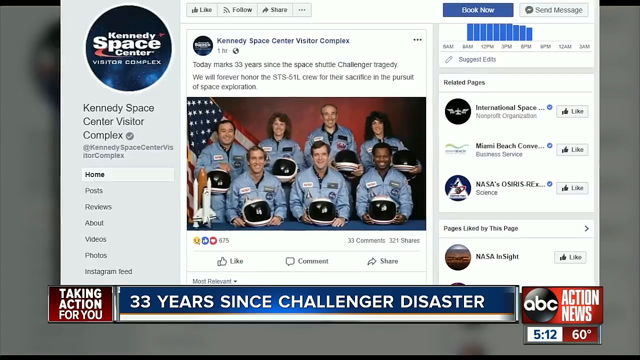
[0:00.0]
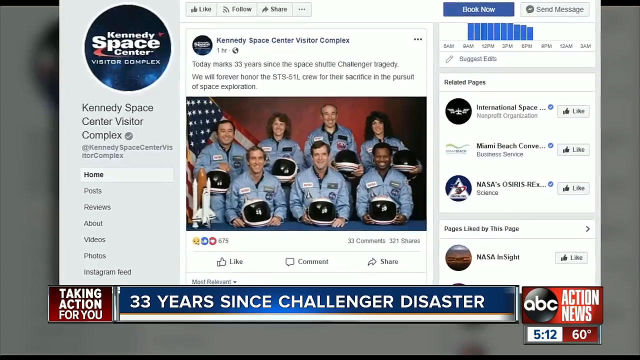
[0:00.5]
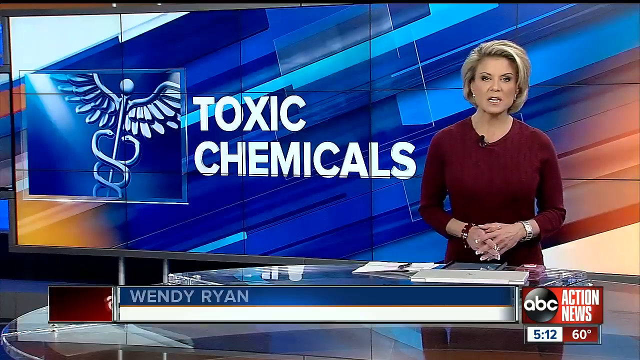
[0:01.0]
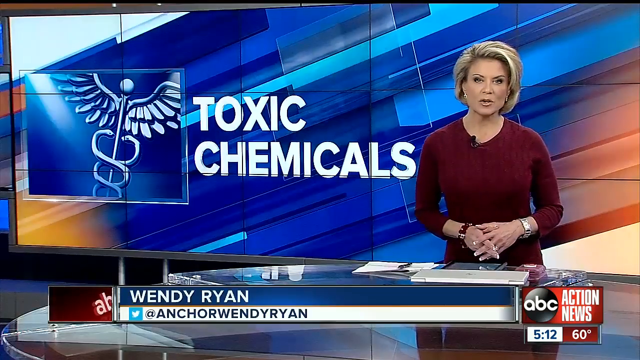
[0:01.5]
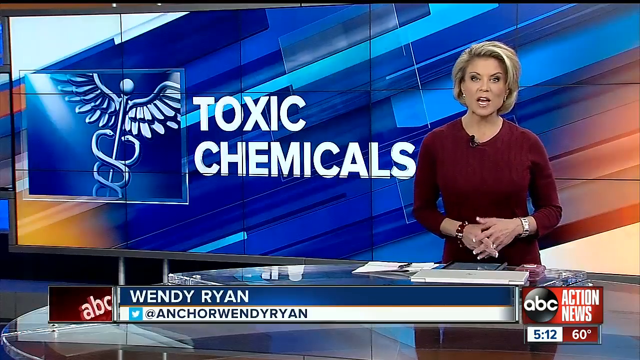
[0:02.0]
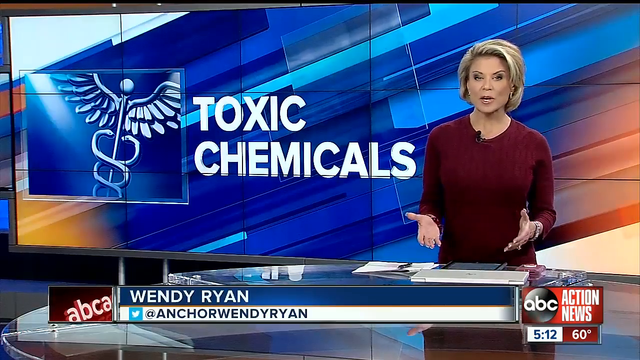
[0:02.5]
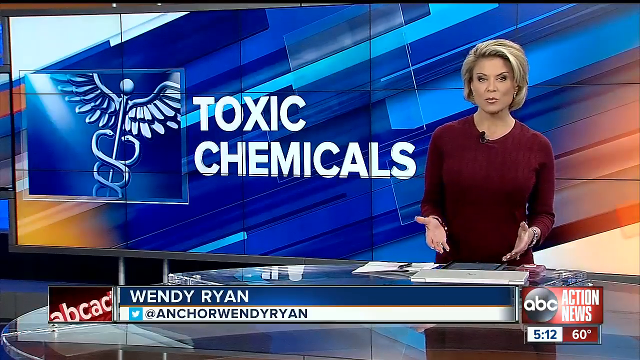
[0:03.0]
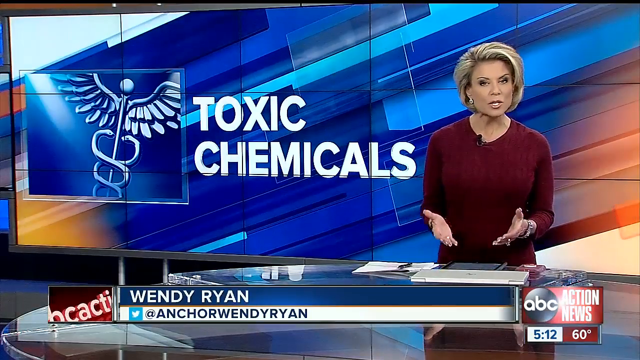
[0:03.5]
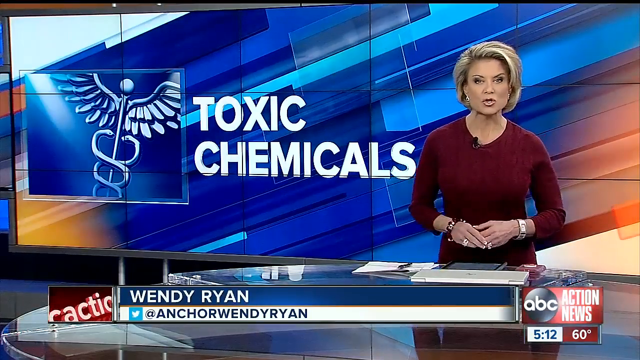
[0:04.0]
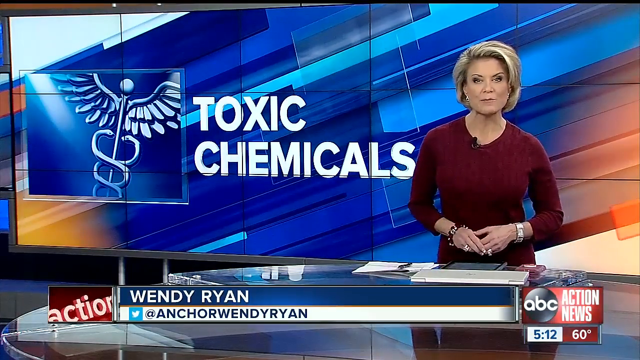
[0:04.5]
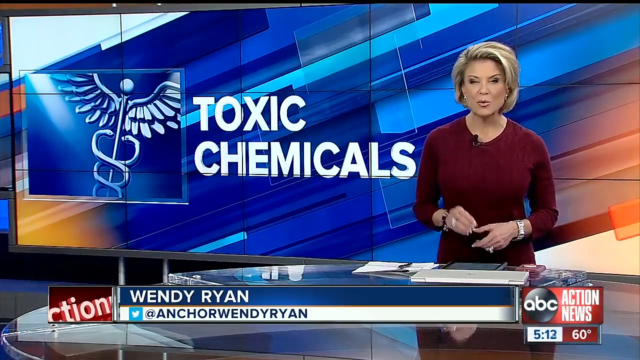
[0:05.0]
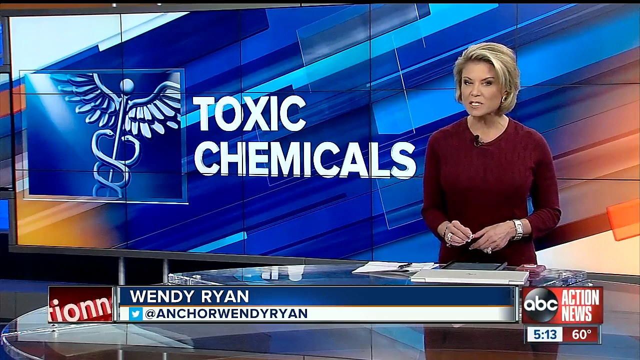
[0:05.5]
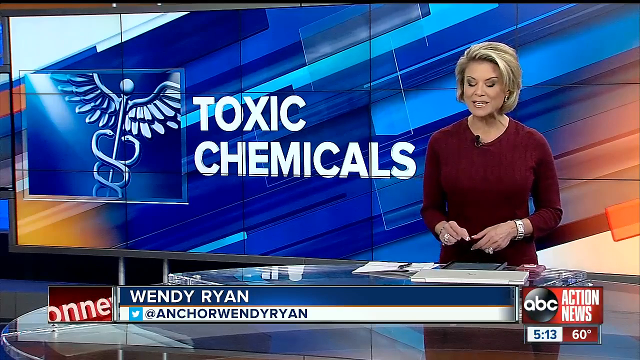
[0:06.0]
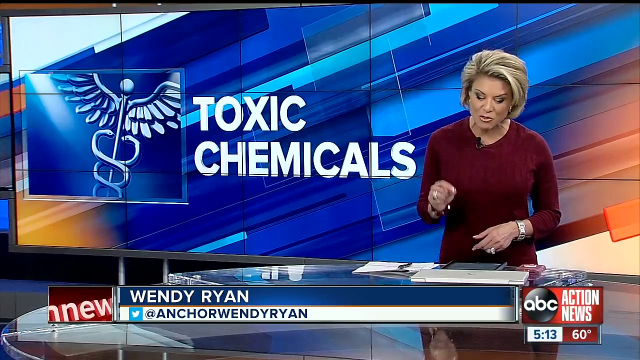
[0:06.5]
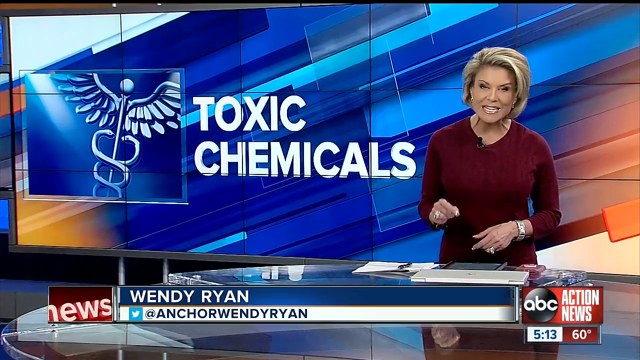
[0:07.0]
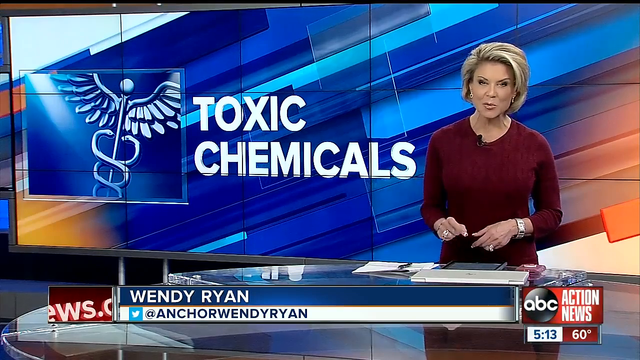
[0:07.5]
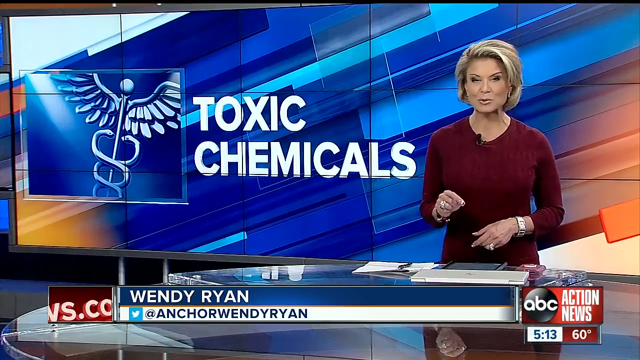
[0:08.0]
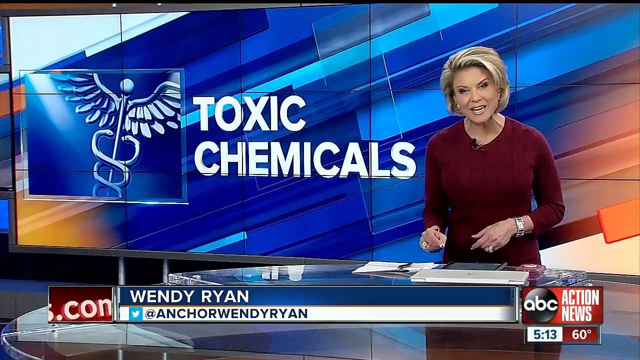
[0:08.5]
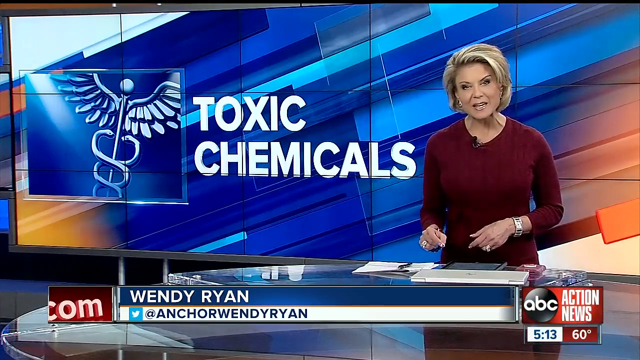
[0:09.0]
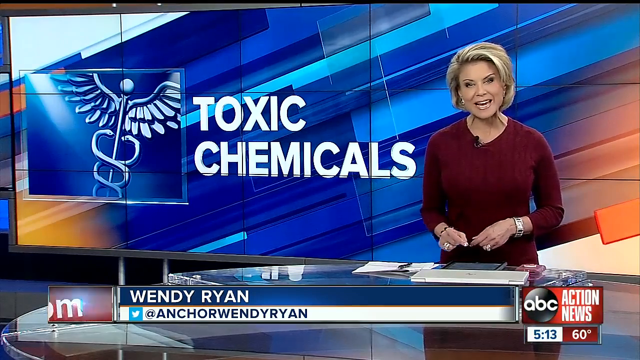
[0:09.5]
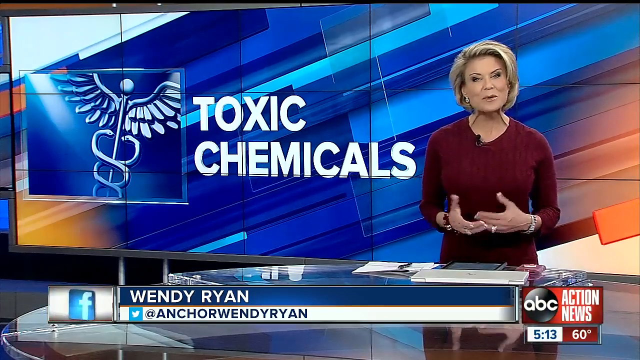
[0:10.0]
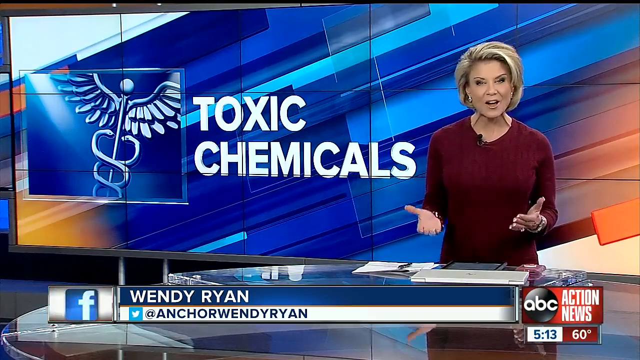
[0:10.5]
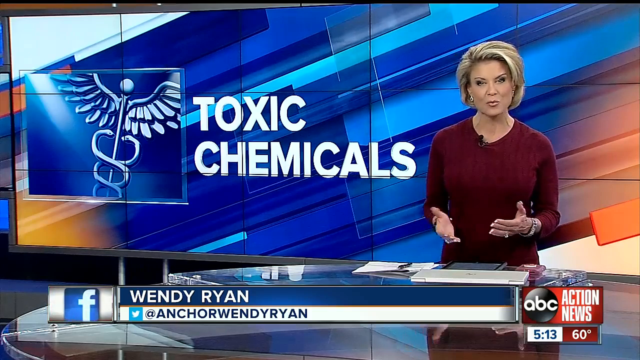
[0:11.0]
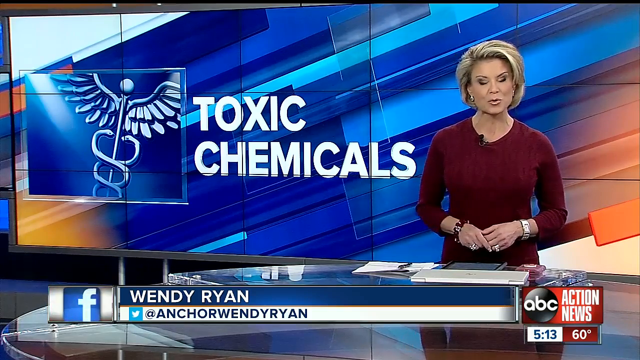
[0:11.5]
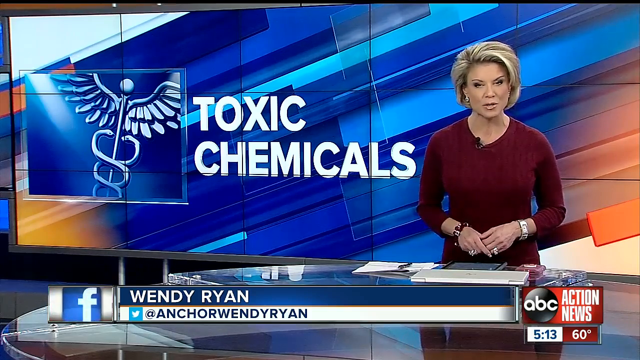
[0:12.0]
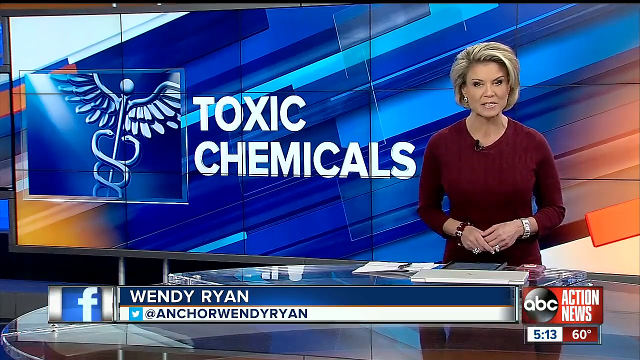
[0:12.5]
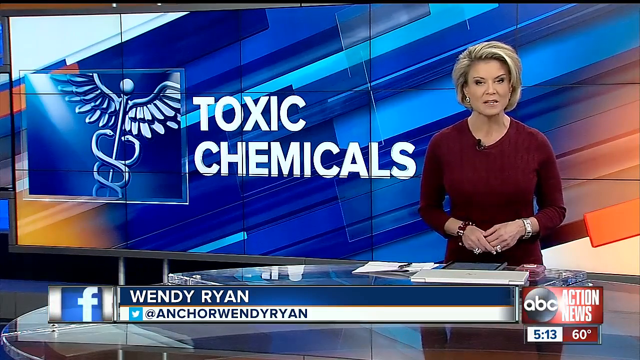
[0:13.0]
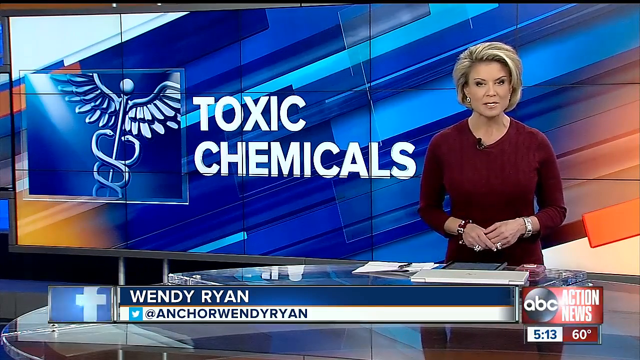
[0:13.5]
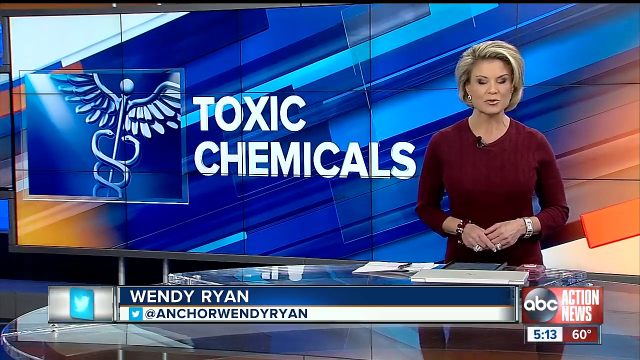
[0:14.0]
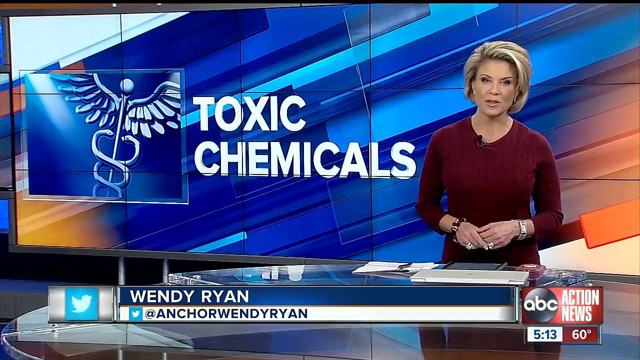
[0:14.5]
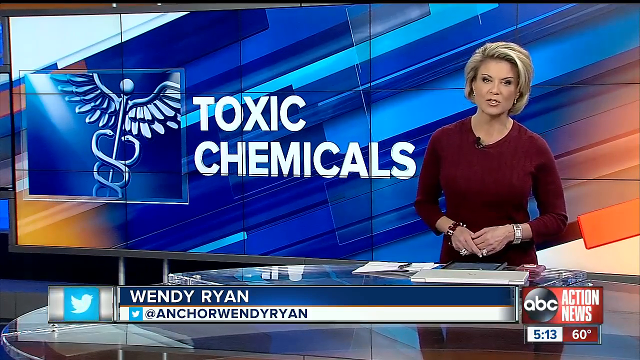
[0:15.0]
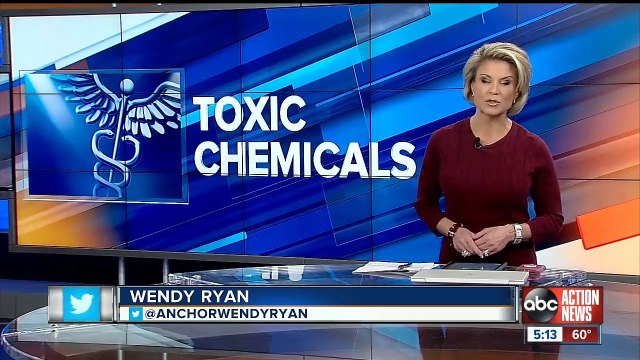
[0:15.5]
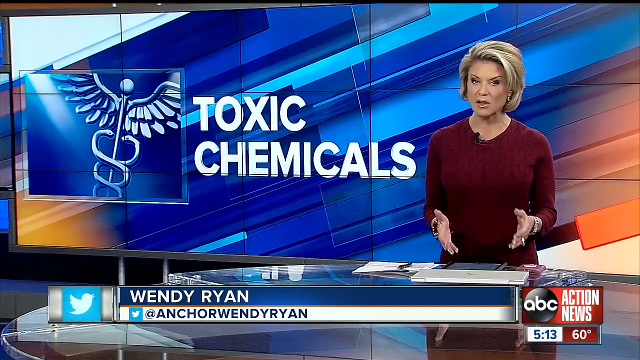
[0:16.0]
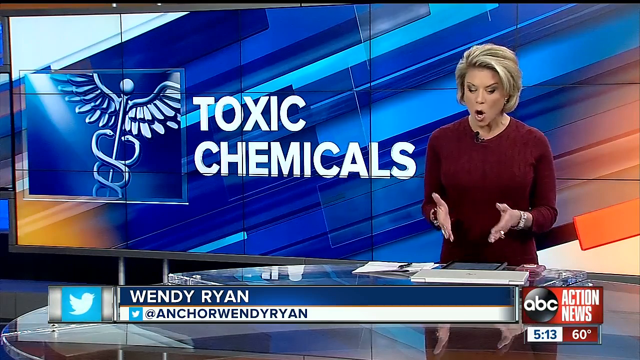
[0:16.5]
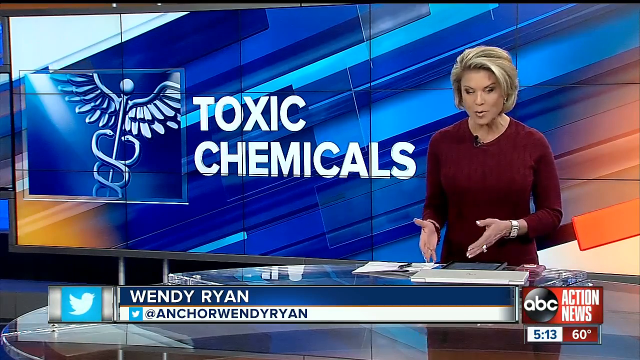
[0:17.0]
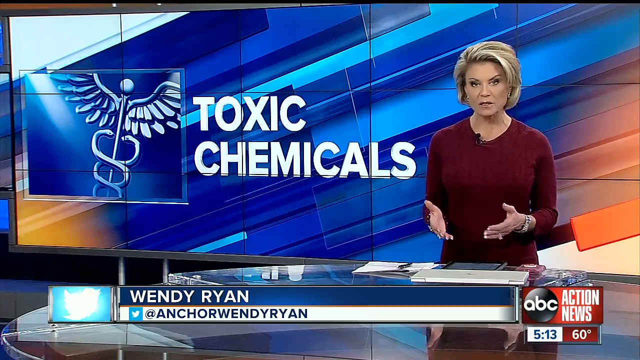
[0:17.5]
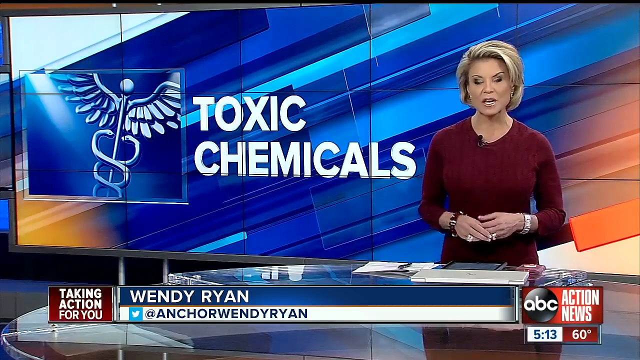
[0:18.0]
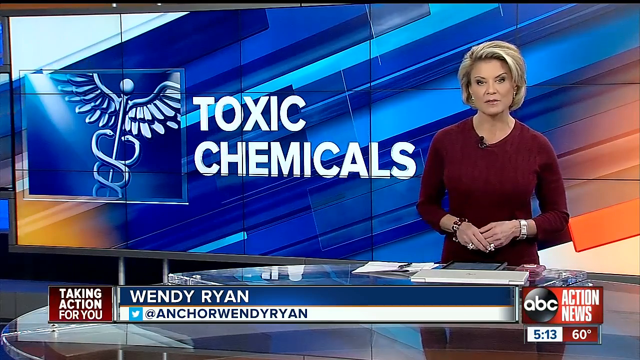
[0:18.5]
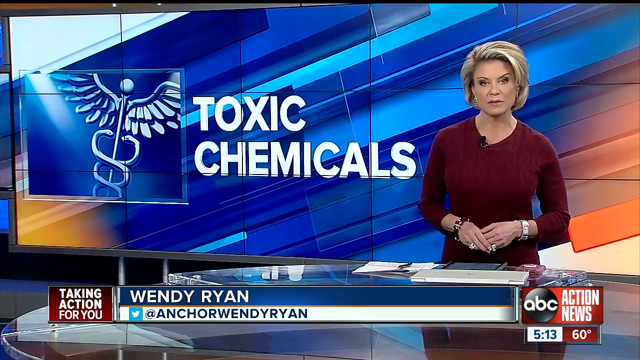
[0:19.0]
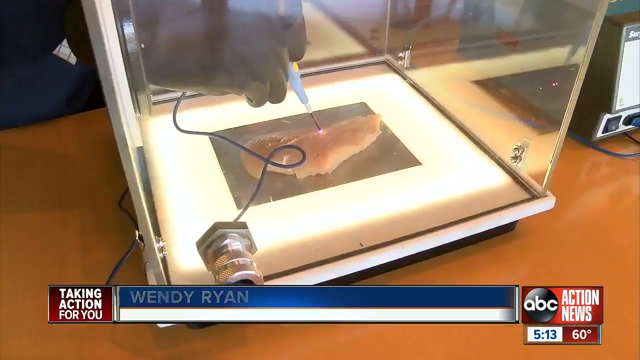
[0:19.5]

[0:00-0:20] An ABC Action News report opens with news anchor Wendy Ryan at a news desk in a studio, with the graphic "toxic chemicals" on a large screen behind her. The newsroom setting behind her shows blue and red, along with a lot of white. She wears a maroon dress with a black recorder on it, has grey hair, and is in her late 40s. She speaks directly to the camera and gestures with her hands. A lower third graphic identifies her as Wendy Ryan and shows her Twitter handle. The video then cuts to a medical or scientific demonstration: a person wearing gloves uses a tool to work on a piece of tissue or meat inside a clear box. Text at the bottom of the screen reads "Keeping health workers from inhaling toxic materials."